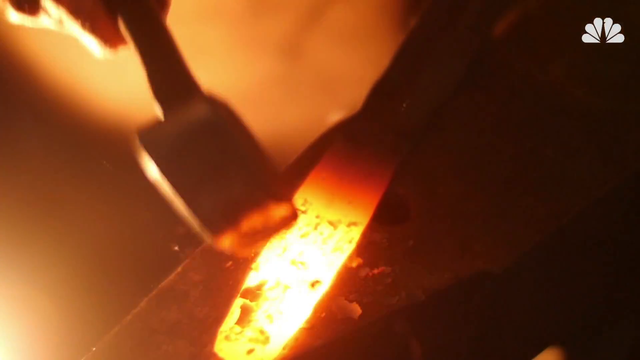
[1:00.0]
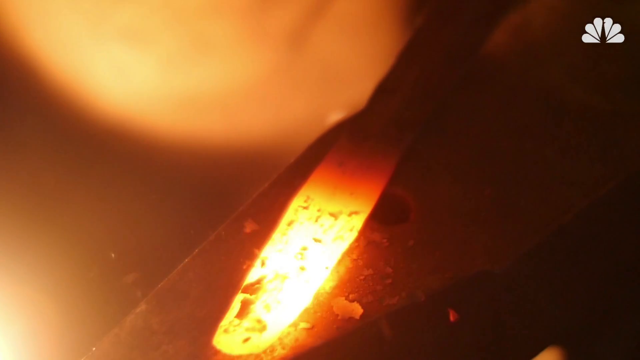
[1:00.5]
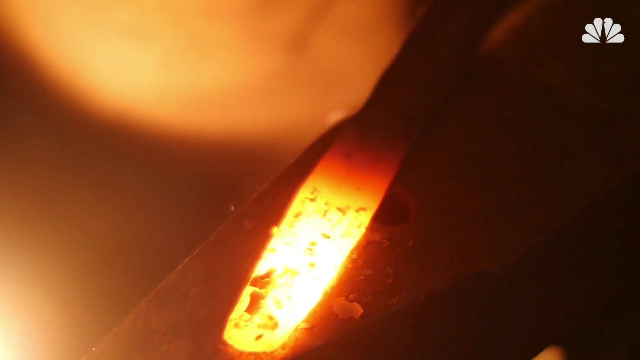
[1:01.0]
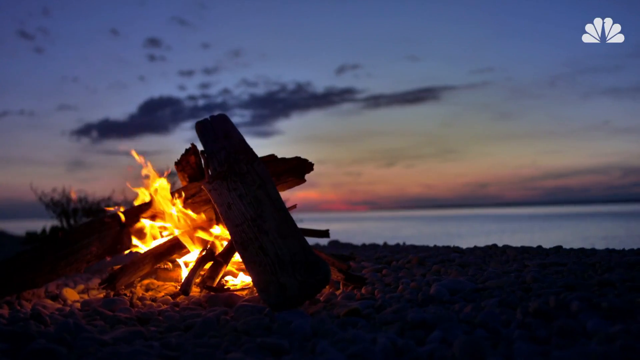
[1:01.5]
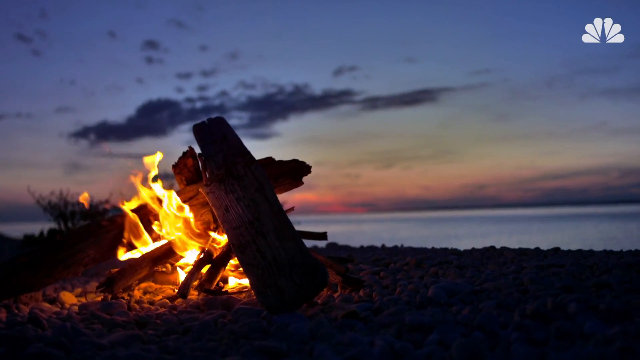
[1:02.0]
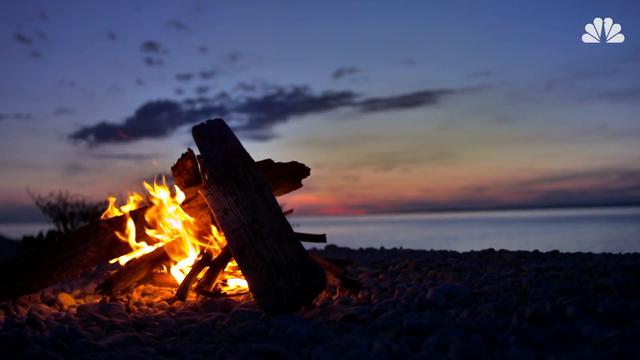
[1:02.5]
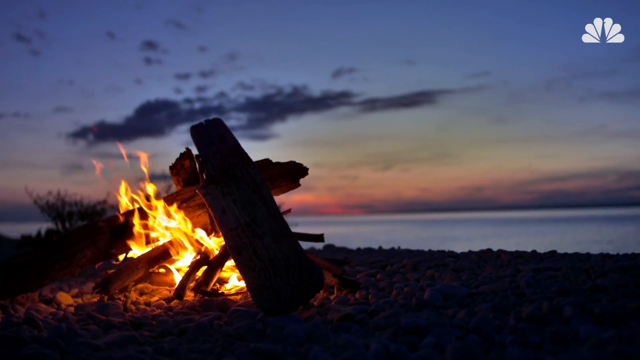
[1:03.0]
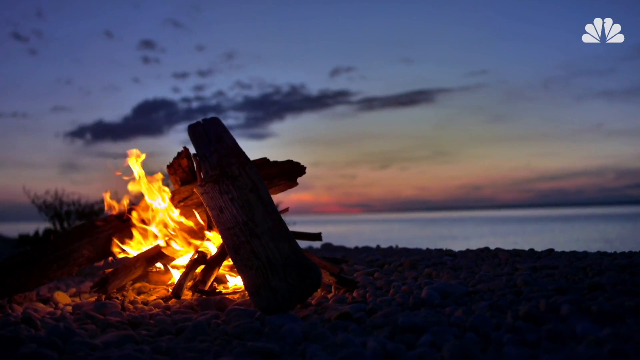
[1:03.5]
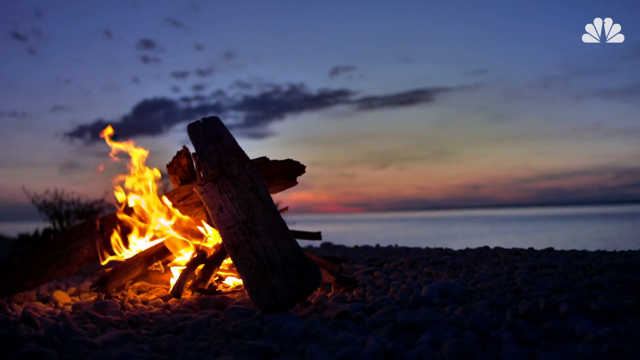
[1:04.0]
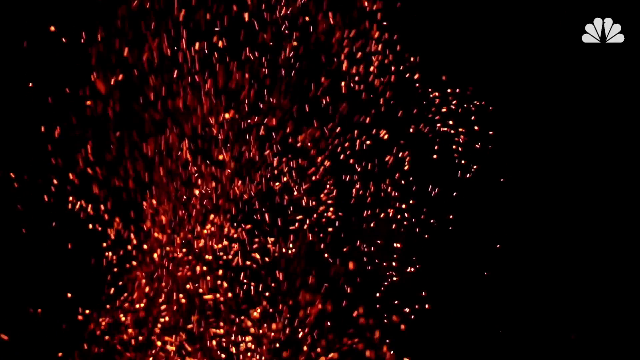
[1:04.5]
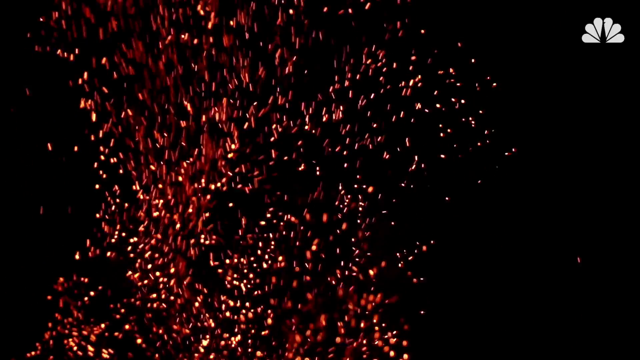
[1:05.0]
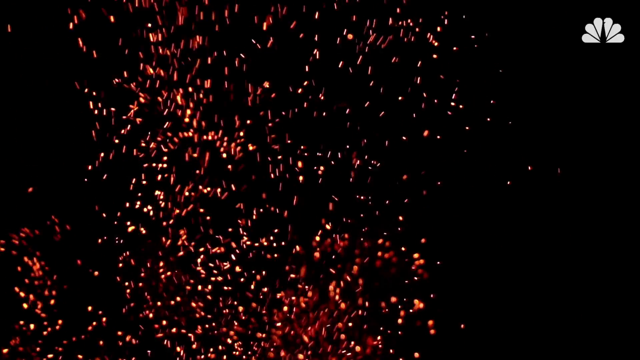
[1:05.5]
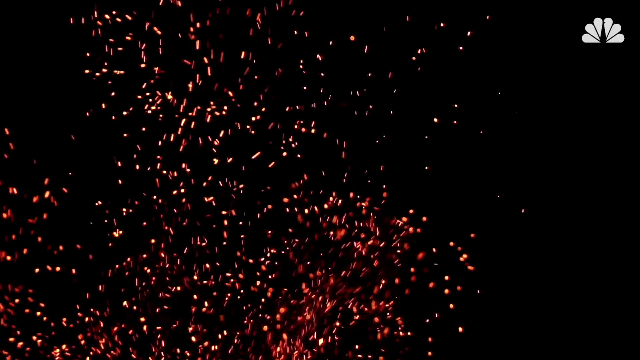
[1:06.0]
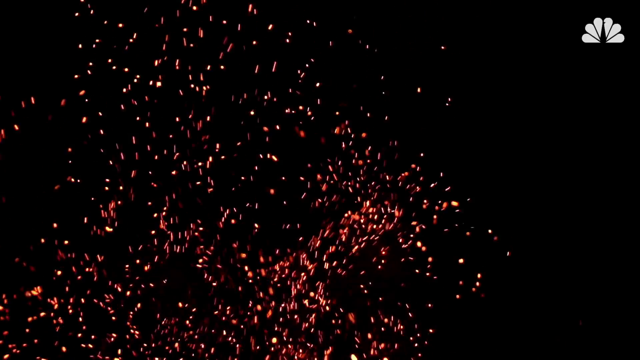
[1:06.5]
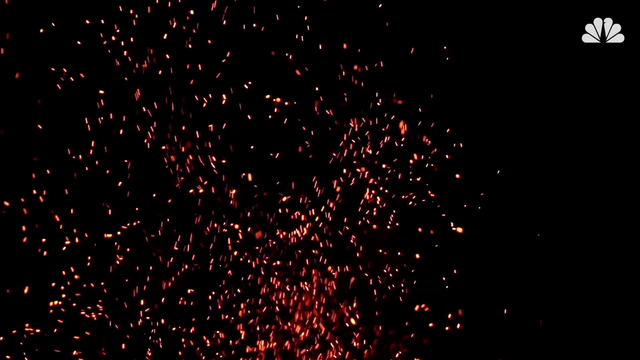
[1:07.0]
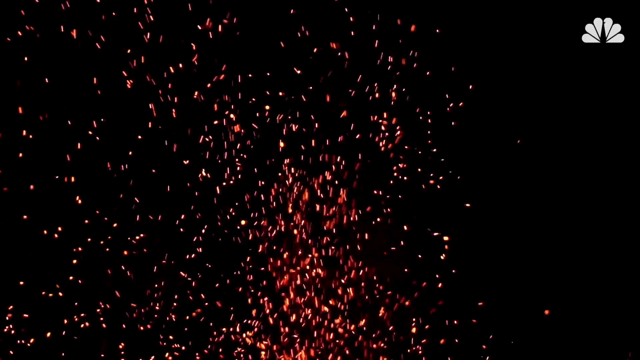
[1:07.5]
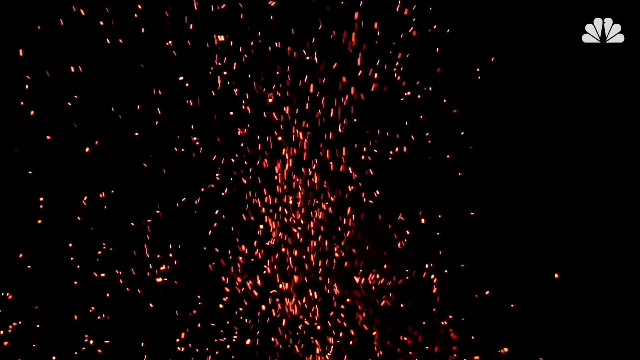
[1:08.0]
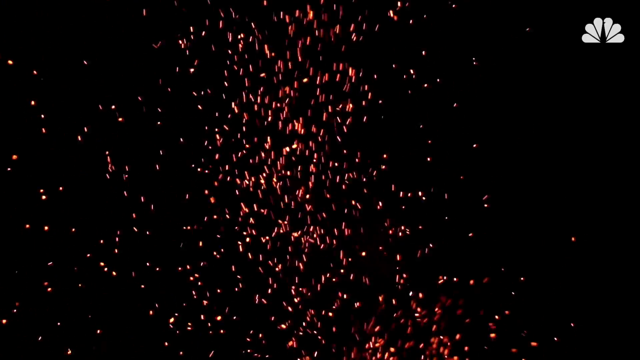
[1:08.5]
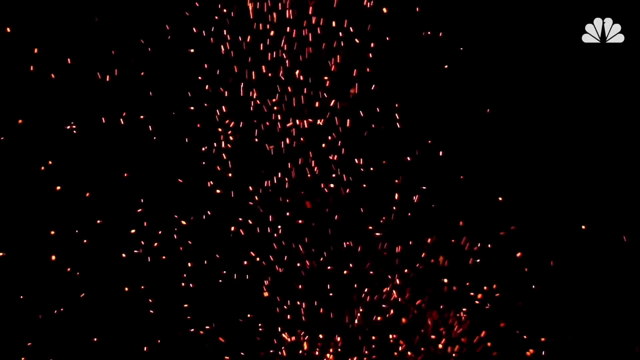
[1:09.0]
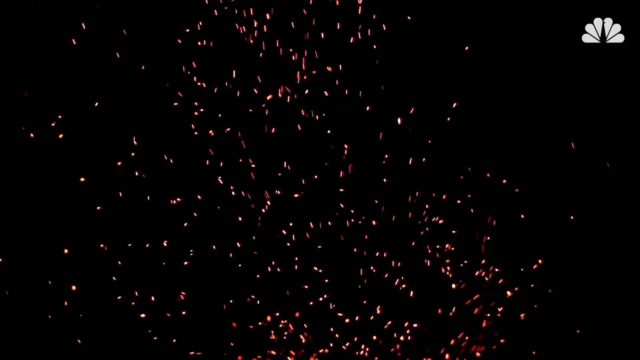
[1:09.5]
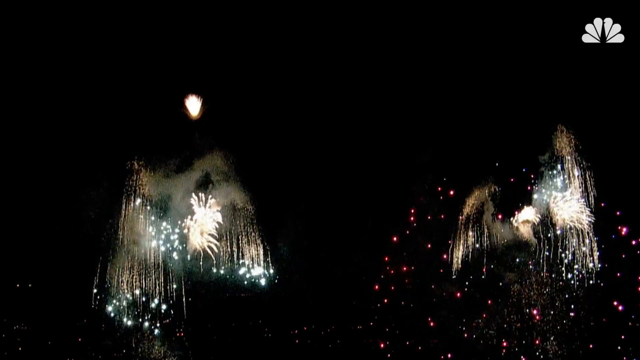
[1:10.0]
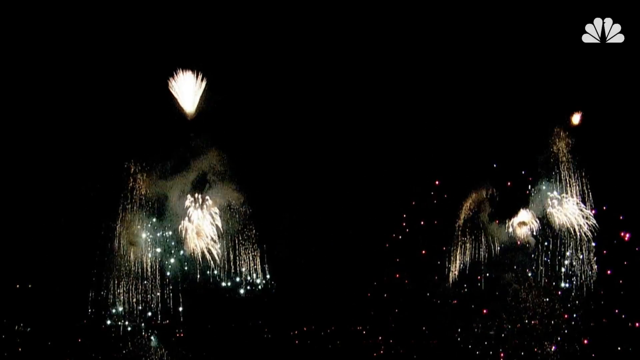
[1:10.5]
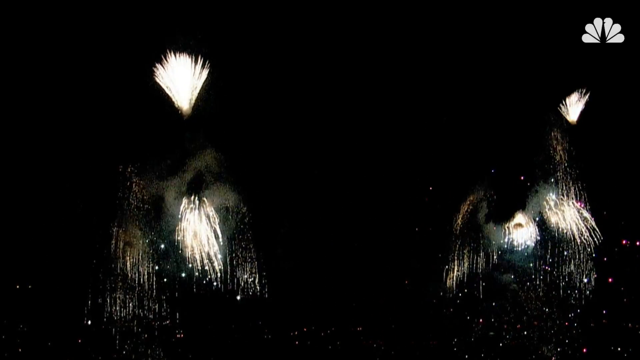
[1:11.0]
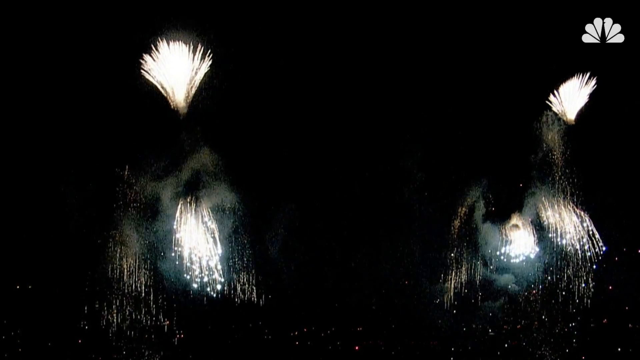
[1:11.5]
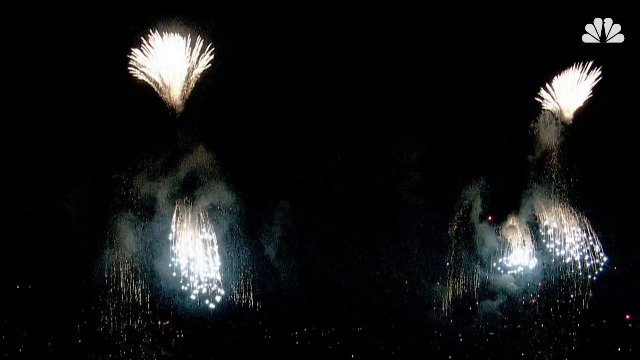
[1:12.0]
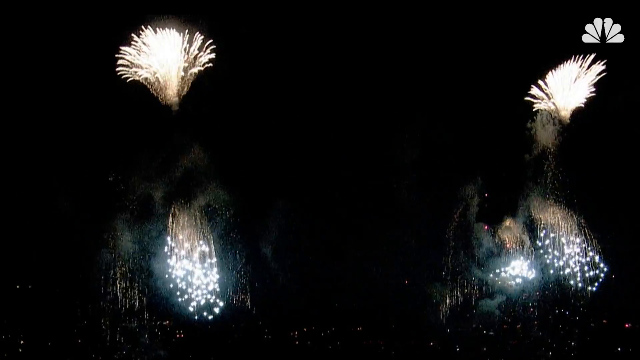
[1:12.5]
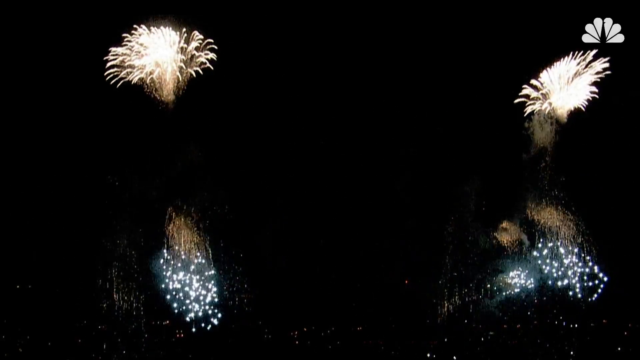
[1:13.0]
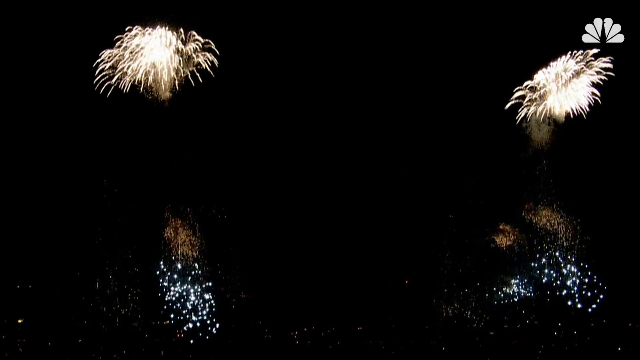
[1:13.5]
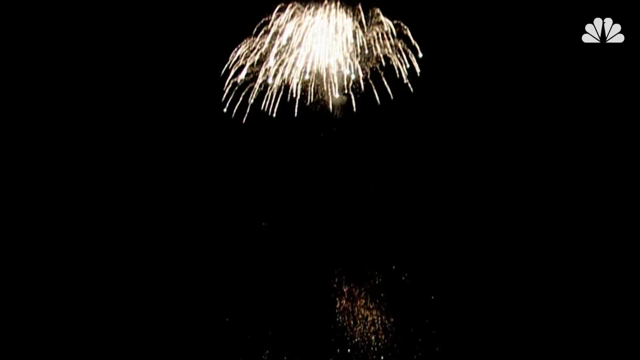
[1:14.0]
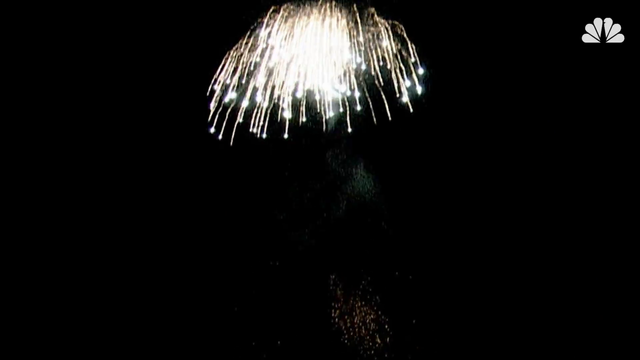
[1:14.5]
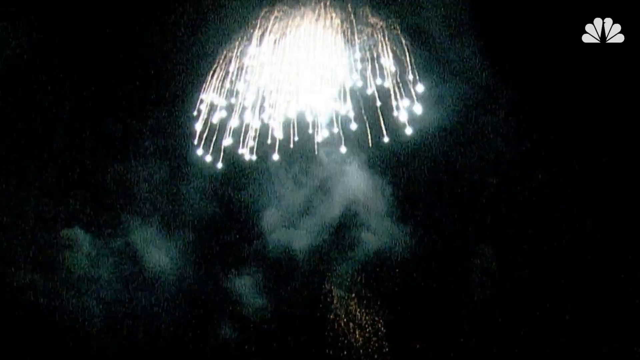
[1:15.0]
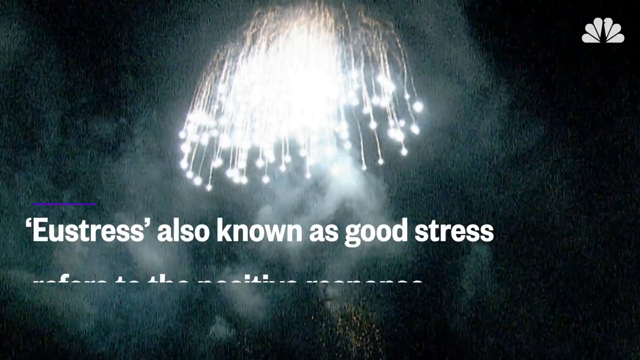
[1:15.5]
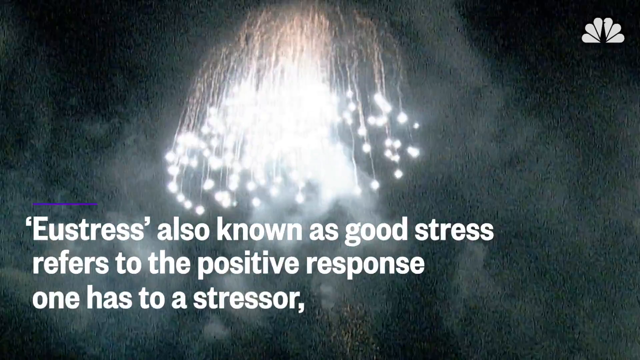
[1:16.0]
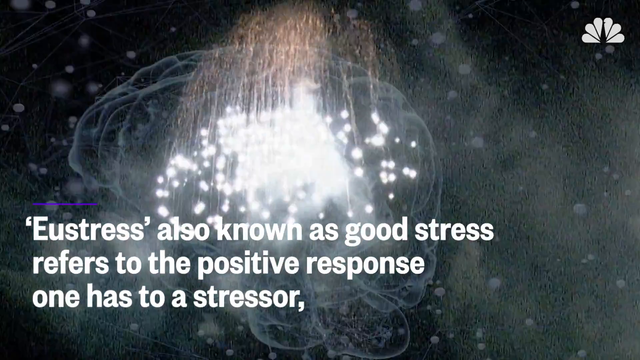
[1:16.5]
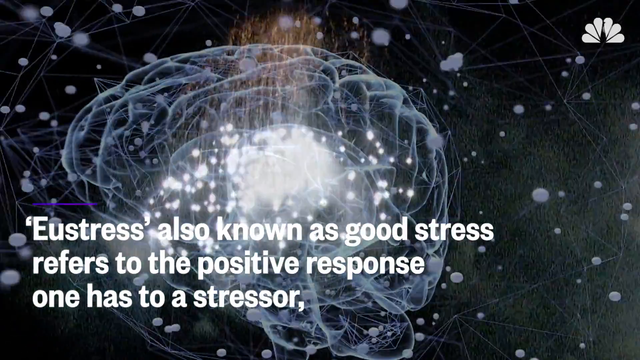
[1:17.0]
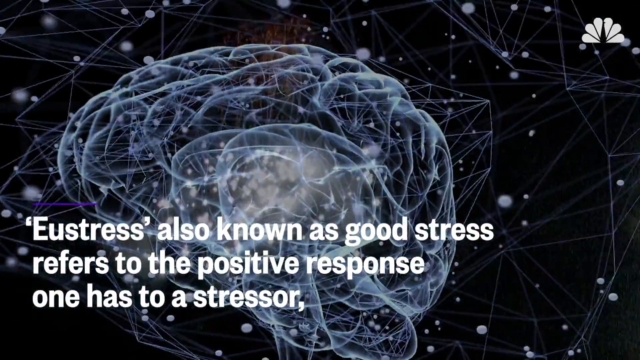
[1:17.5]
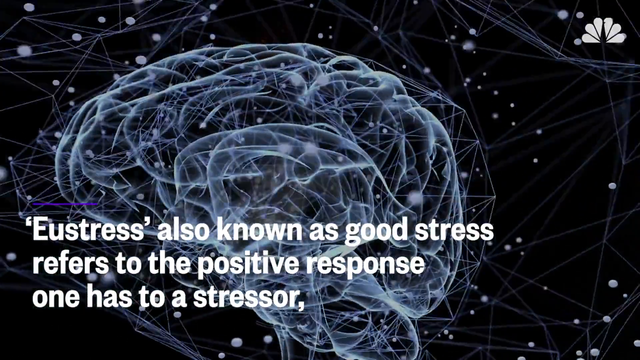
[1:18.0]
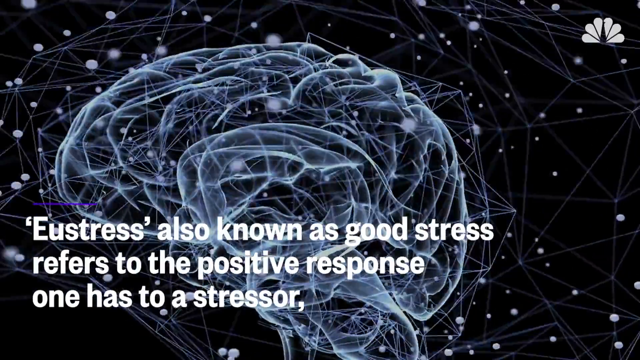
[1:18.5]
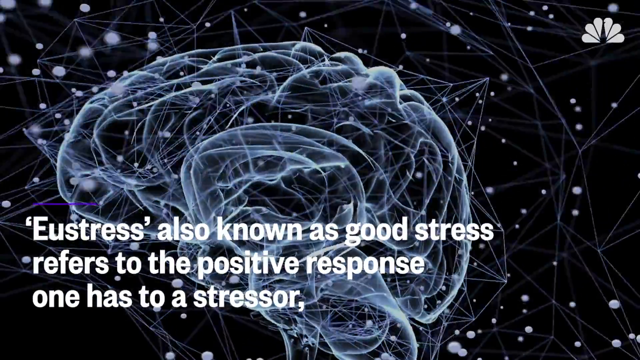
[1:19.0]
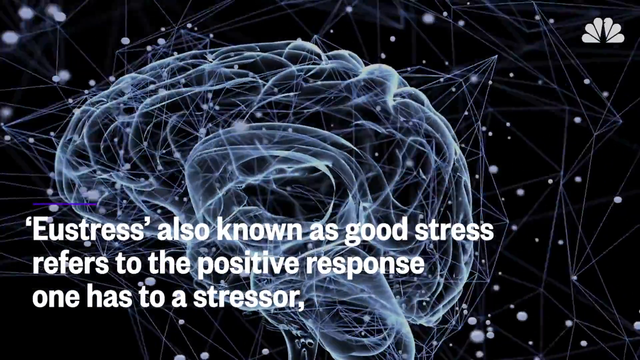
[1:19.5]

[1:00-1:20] A fire burns, possibly on a beach, with a backdrop visible in the background. Some water also appears to be visible, suggesting the fire is next to the coast. The fire is an orangey-yellow colour. Embers are emitted from the fire; these vivid red sparks and dots move upwards in a wave-like pattern. Then some fireworks are released, quite white in colour. While the fireworks are set off, on-screen text reads "eustress, also known as good stress, refers to the positive response one has to a stressor".